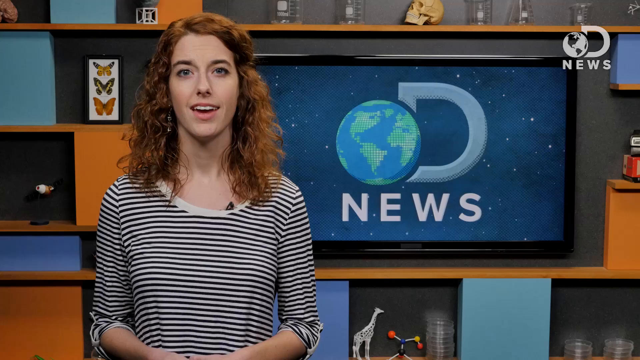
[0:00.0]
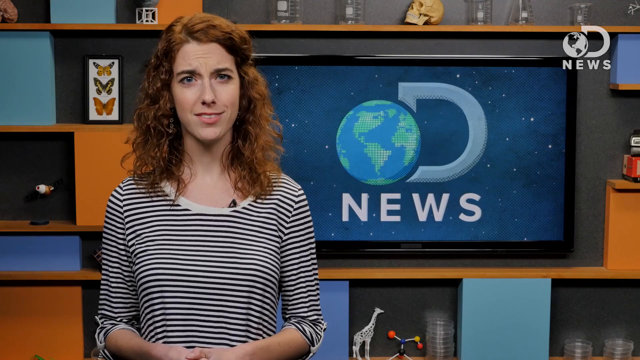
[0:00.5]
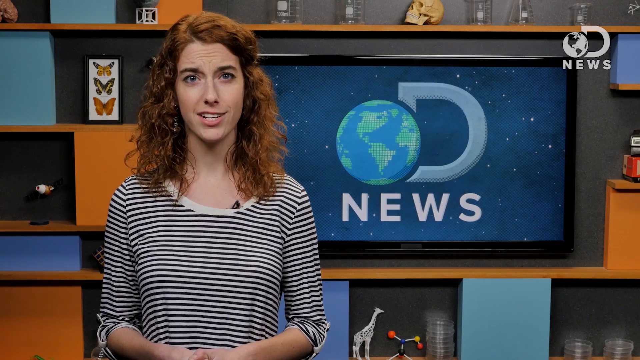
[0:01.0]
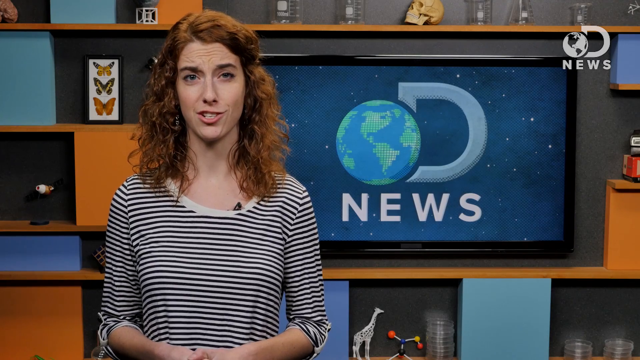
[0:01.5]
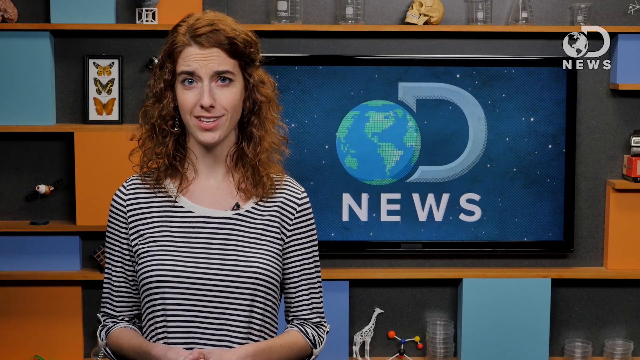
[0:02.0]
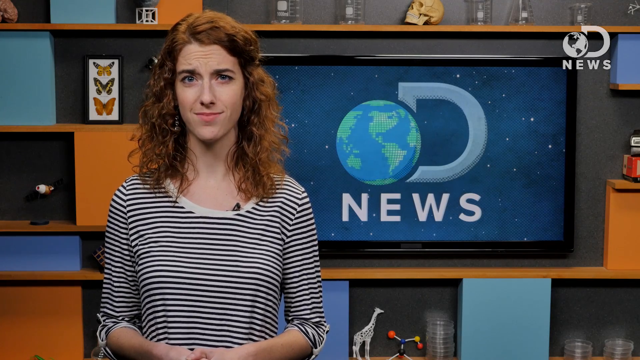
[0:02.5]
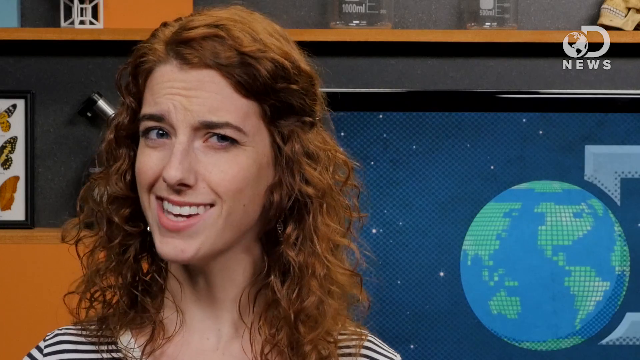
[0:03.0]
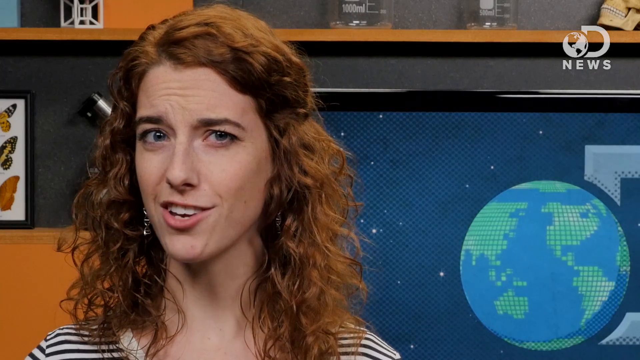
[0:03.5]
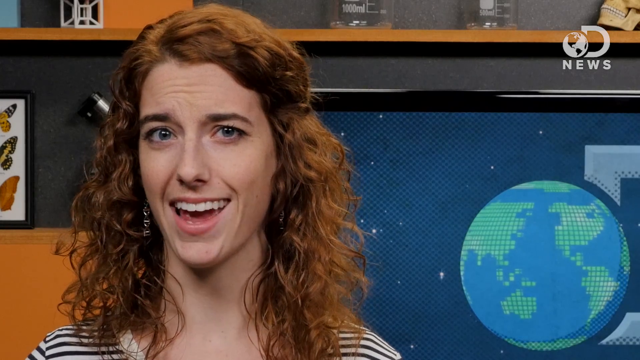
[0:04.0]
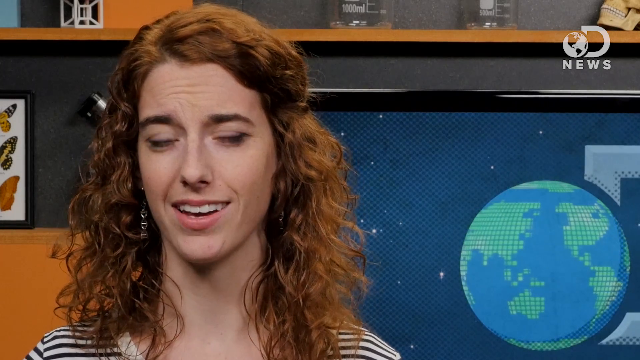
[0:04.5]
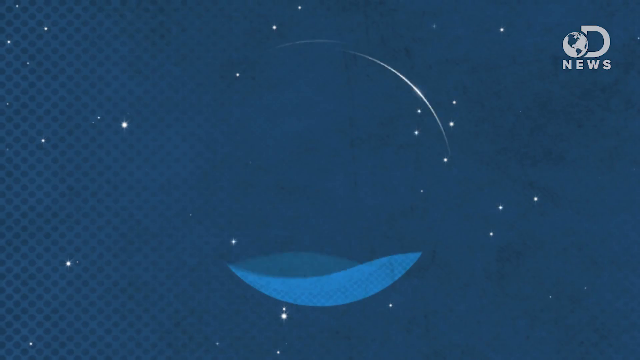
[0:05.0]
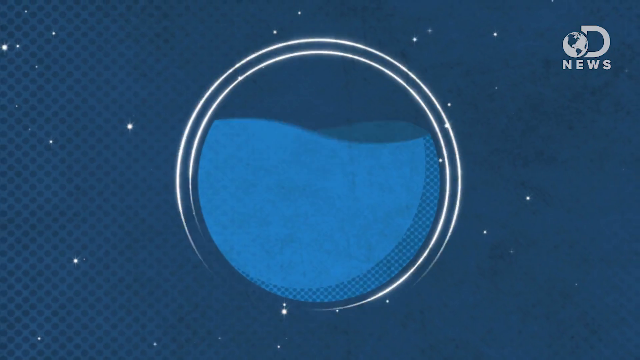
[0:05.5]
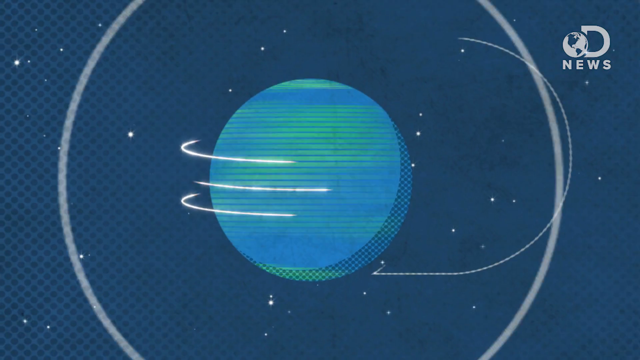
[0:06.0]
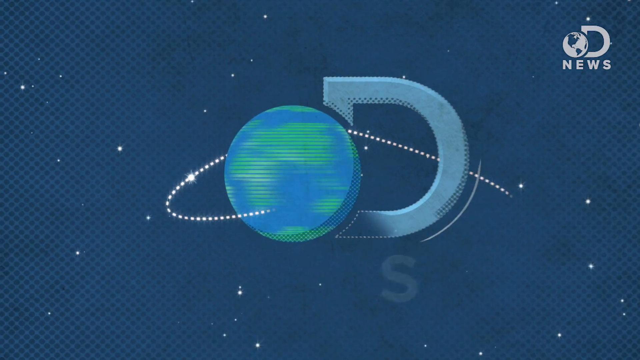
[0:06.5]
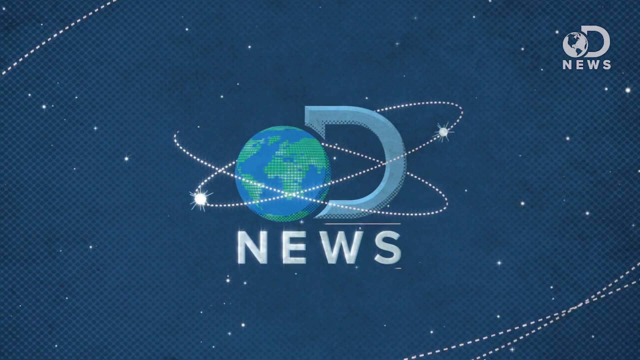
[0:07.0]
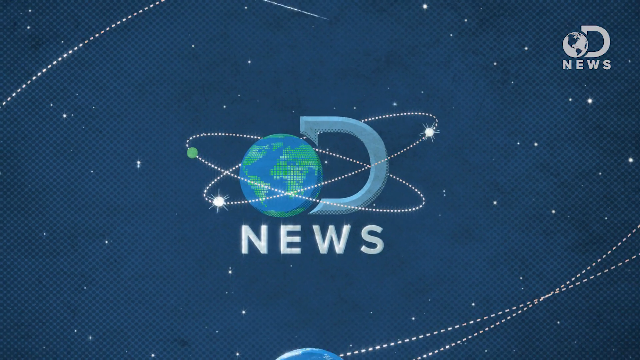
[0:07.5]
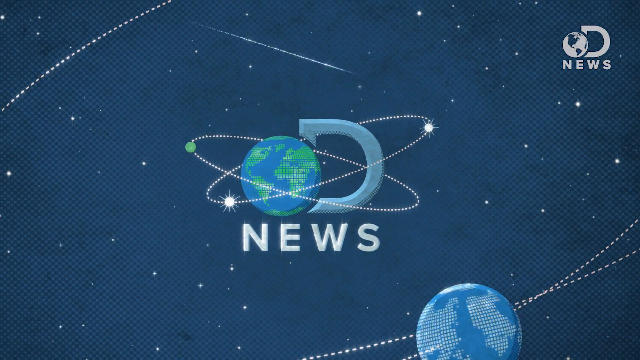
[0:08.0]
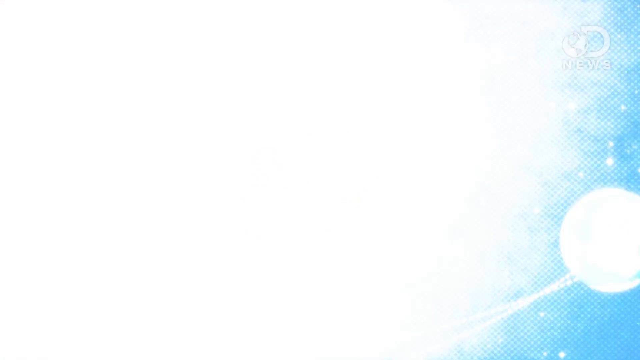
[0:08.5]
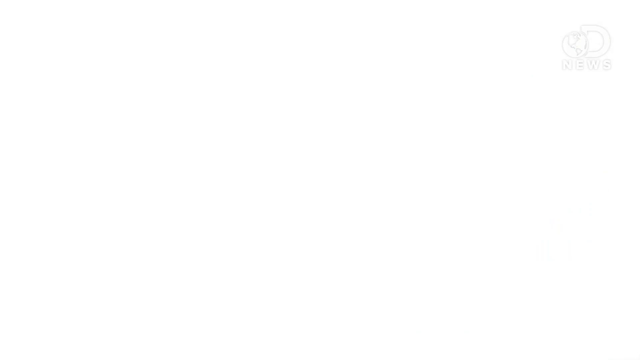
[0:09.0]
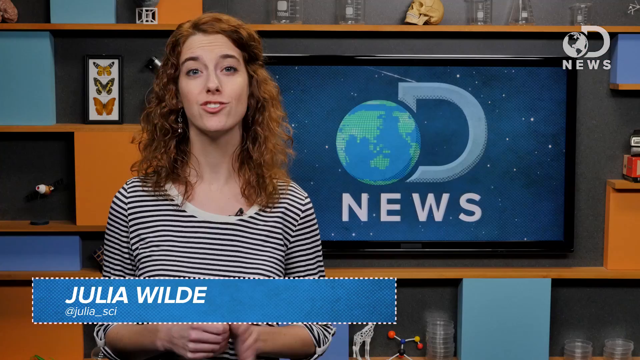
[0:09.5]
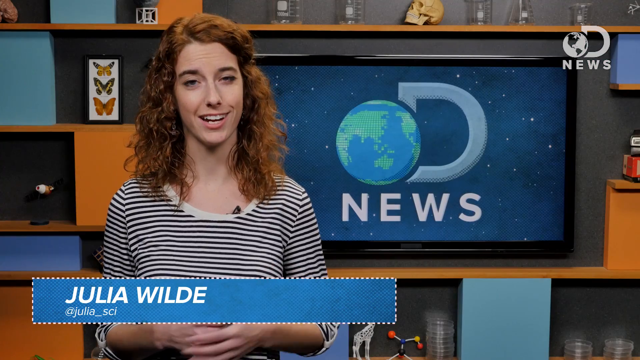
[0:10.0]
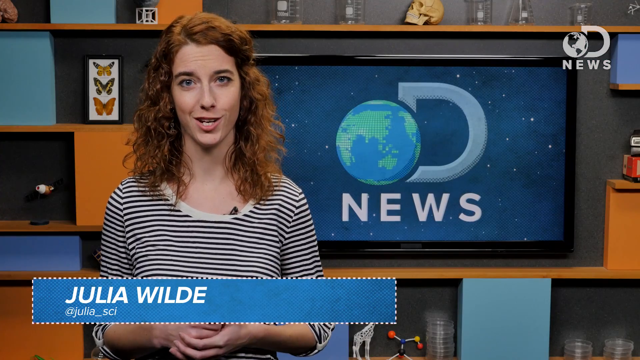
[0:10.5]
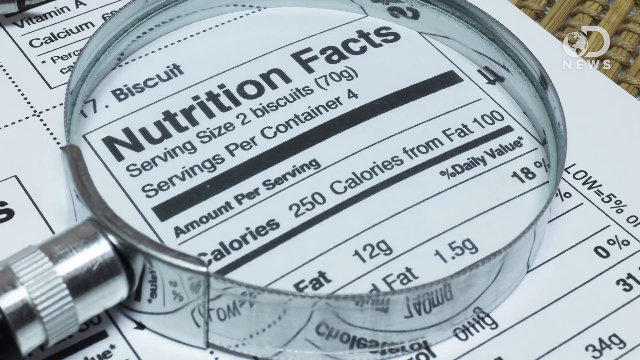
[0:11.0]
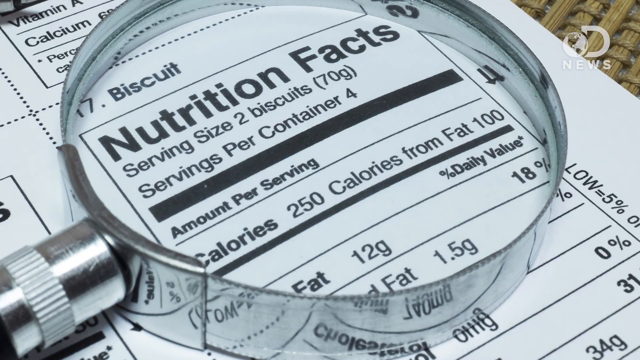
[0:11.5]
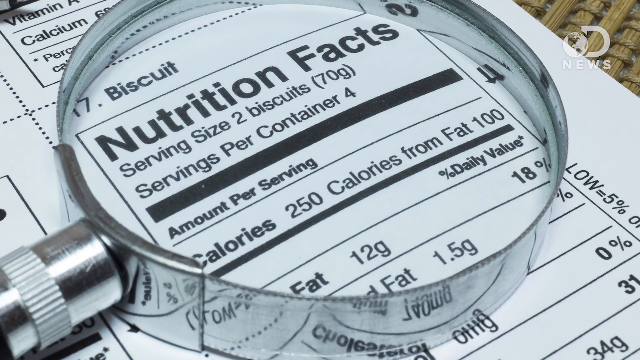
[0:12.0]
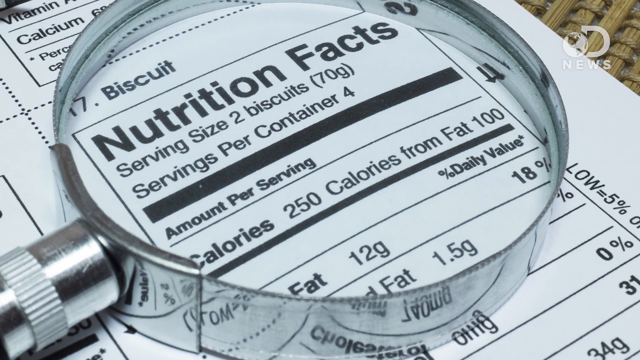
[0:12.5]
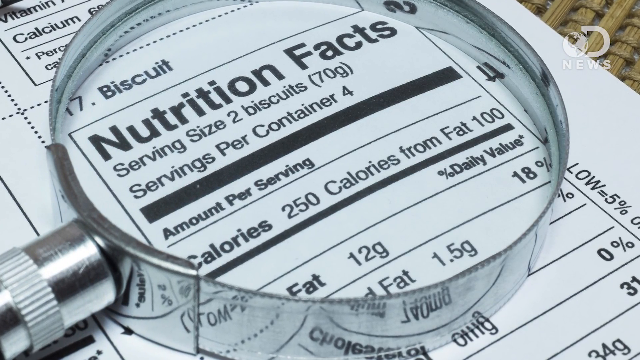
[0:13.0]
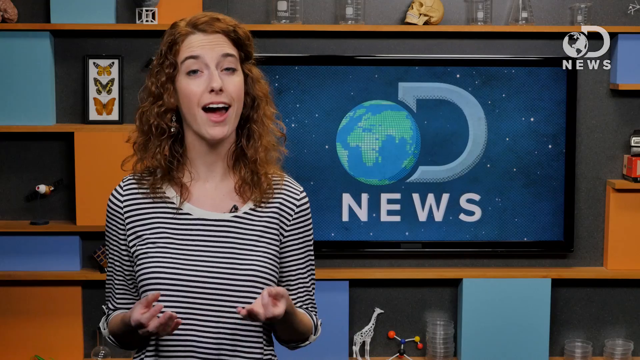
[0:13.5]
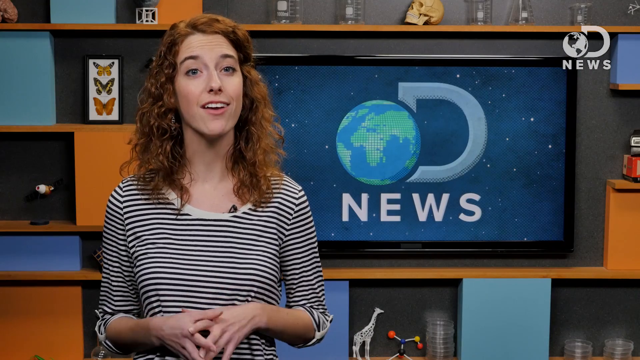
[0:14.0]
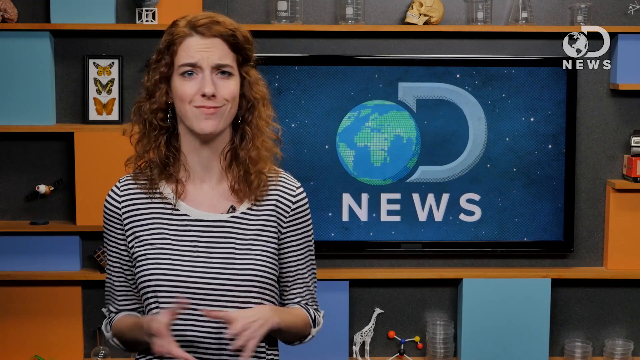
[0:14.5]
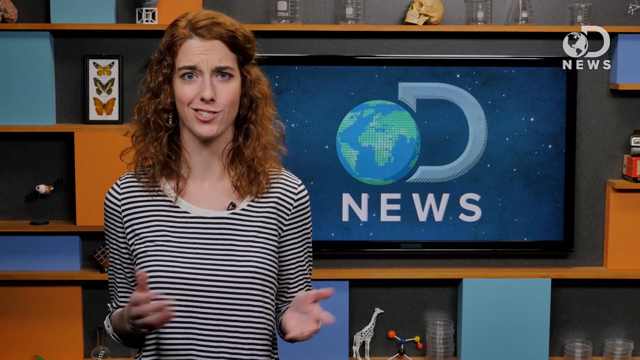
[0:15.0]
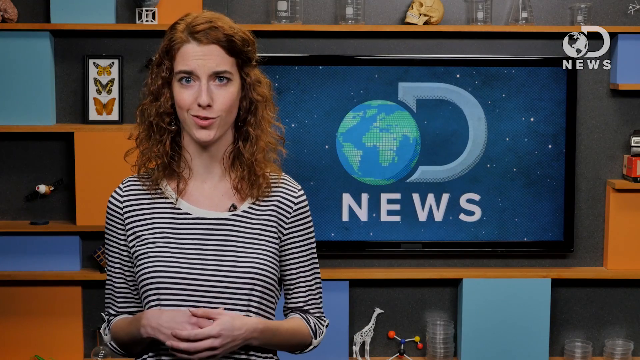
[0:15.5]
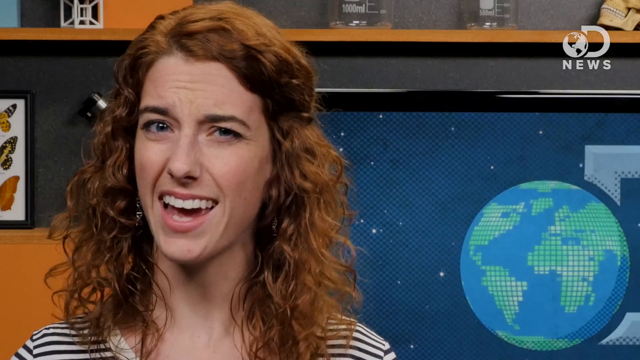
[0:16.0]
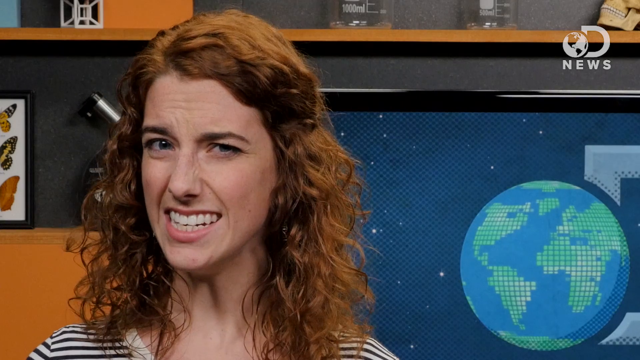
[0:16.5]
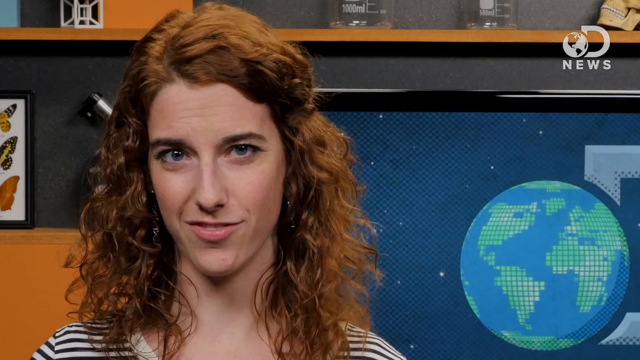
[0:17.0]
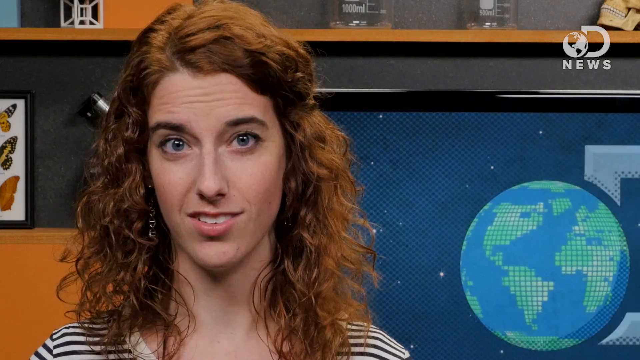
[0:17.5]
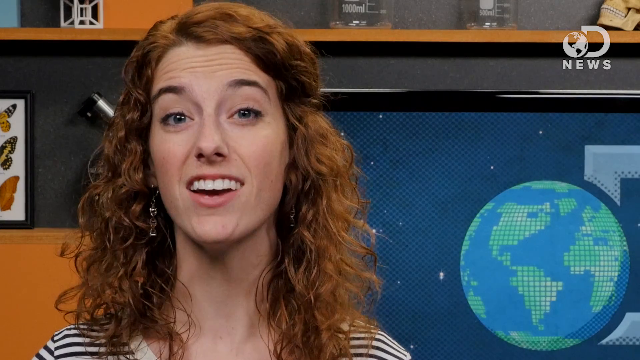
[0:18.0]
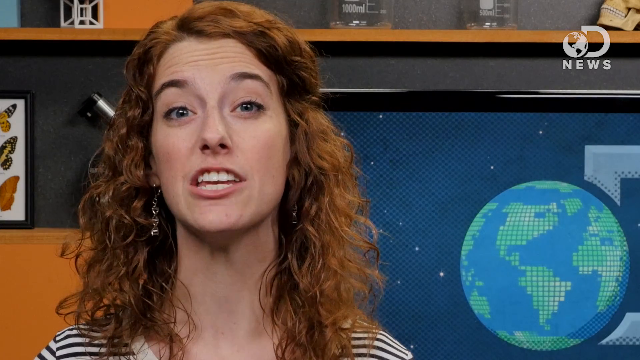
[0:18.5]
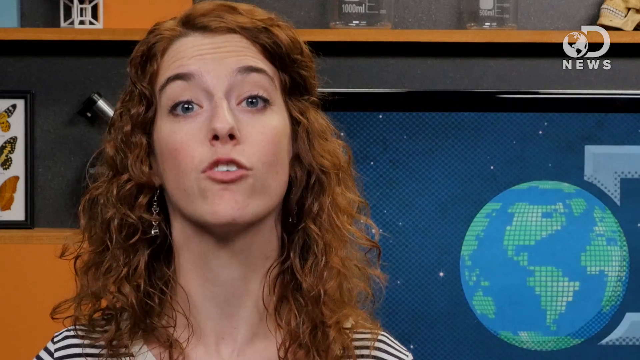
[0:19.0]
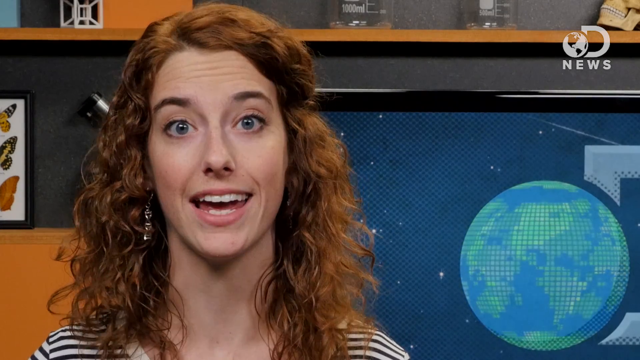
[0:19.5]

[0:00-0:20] The video opens with what looks to be a news organization's logo: a spinning earth with the letter D next to it, and then "news." Next, a woman stands in front of a TV that shows the same news logo. She is talking and has long reddish curly hair. The title of the video is "Can you trust the calories on foods?", and her name, "Julia Wilde," appears at the bottom of the screen. A picture follows of a food product that looks like biscuits, showing the ingredients and calorie count, with a magnifying glass on top of it looking closely at the calorie count. The label reads 250 calories per biscuit and a serving of four, and then shows four servings per container and 250 calories.